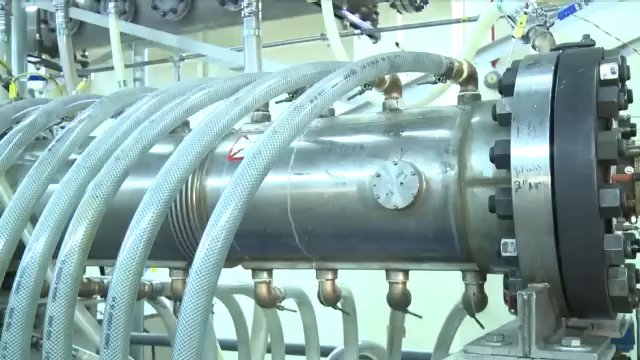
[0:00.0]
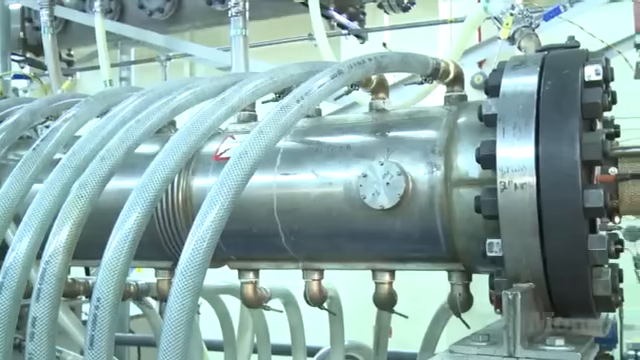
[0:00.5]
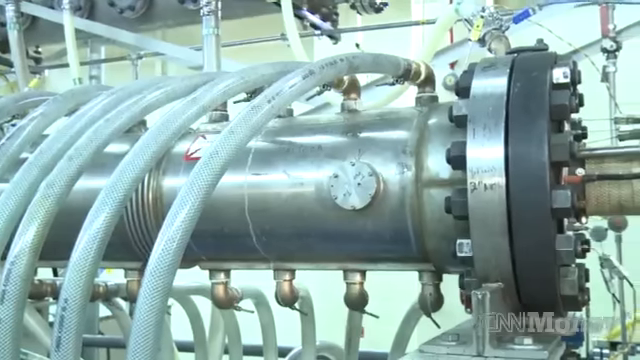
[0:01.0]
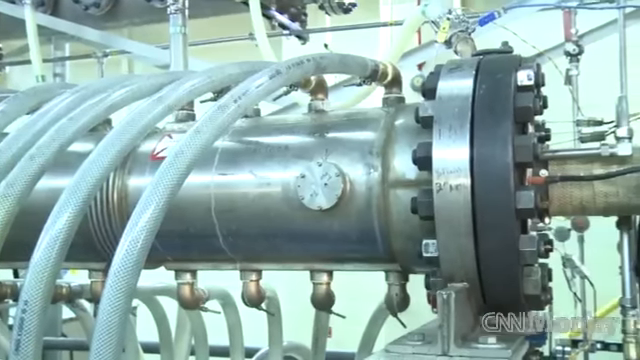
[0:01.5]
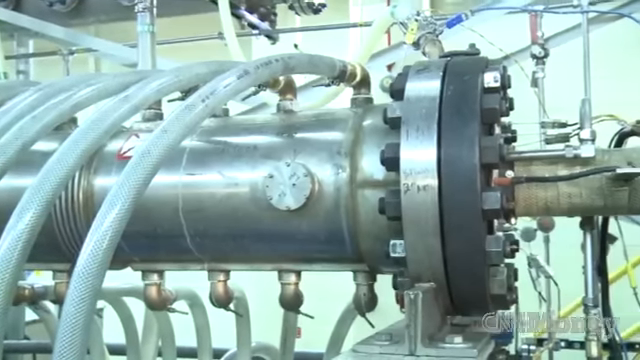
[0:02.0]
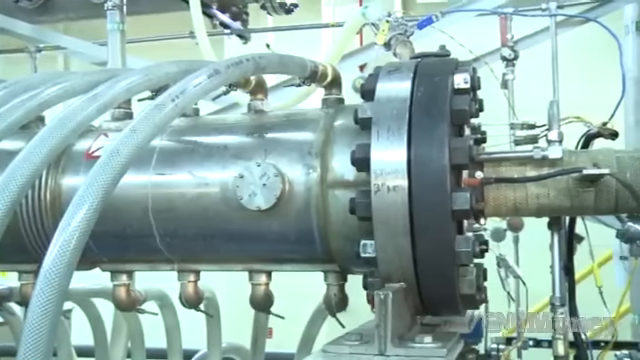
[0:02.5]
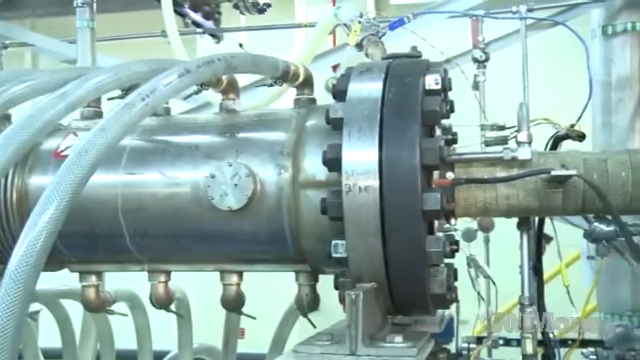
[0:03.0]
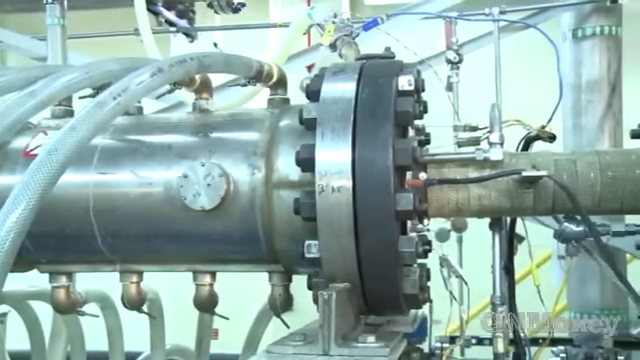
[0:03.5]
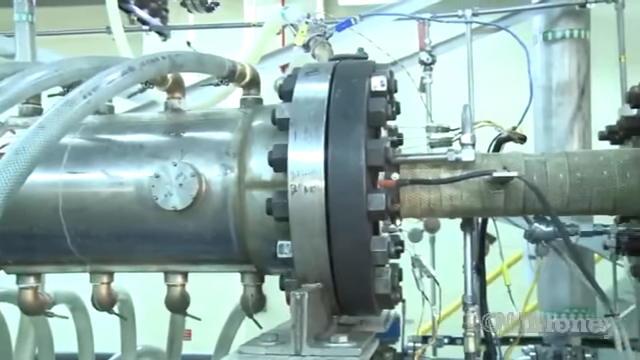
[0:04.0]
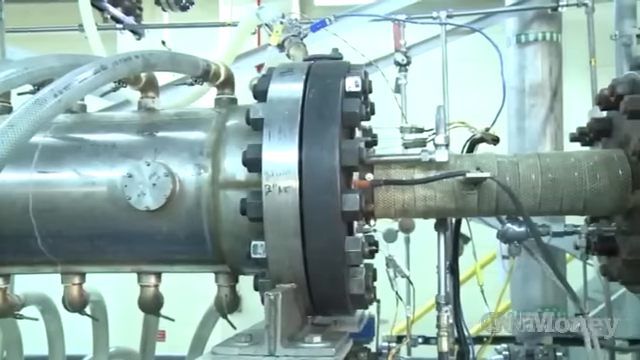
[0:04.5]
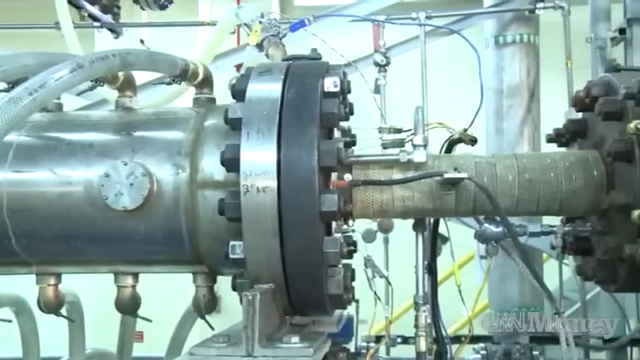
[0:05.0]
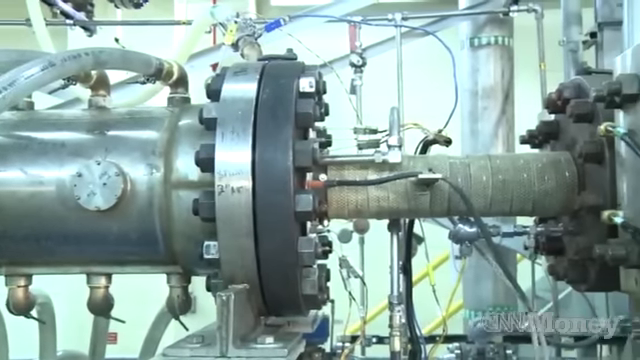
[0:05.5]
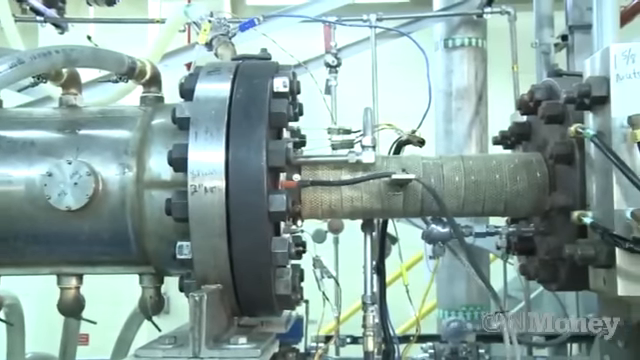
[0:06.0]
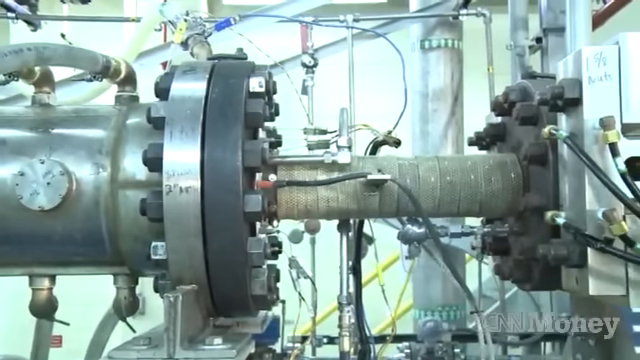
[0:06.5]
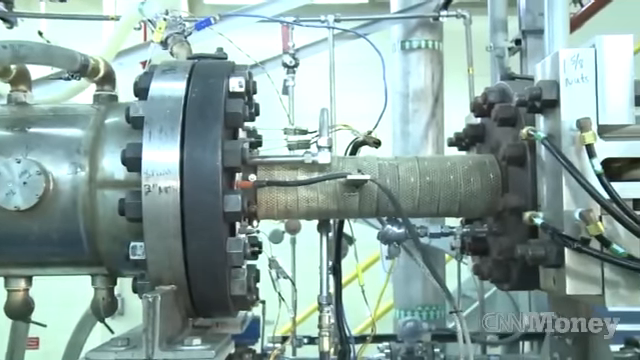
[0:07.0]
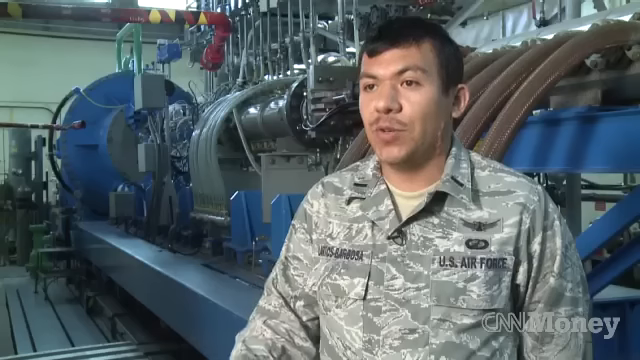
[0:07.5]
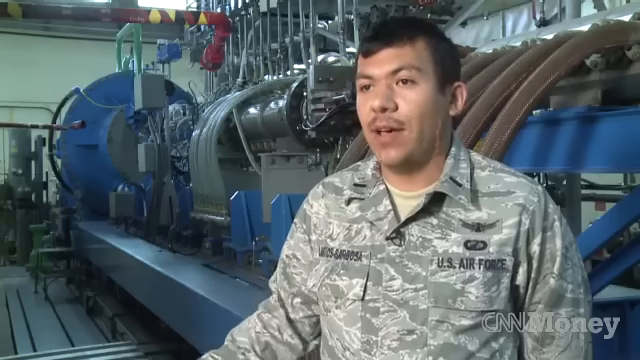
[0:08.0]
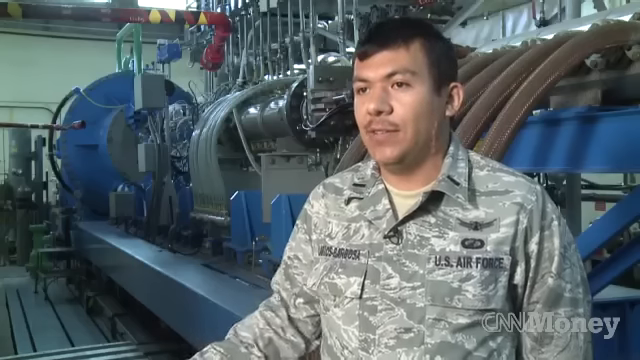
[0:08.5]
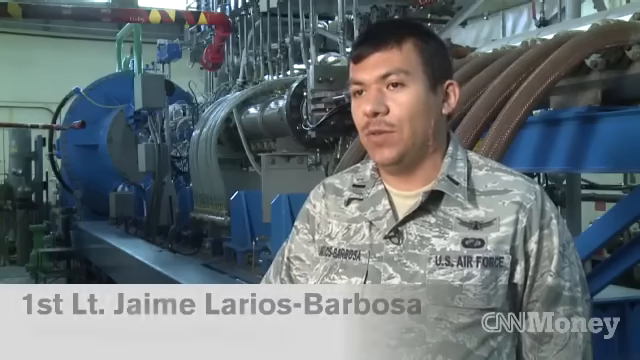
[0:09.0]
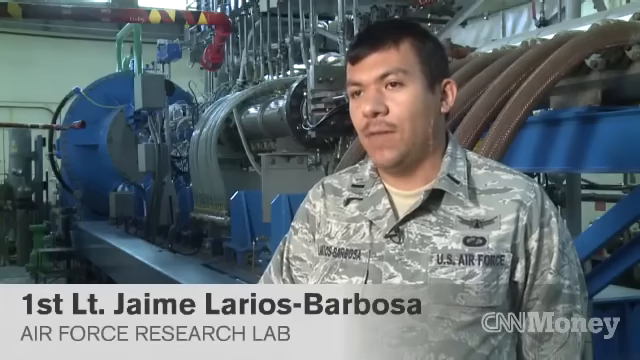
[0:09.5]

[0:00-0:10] A large piece of silver metal equipment fills the screen. Large tubes, about eight of them, come out of the top, and very large, massive bolts are on the front. It looks like it is connected to another large piece of equipment. The video then goes to a man from the US Air Force, First Lieutenant Jamie Larios-Barbosa of the Air Force Research Lab, who is standing in front of the equipment and speaking.